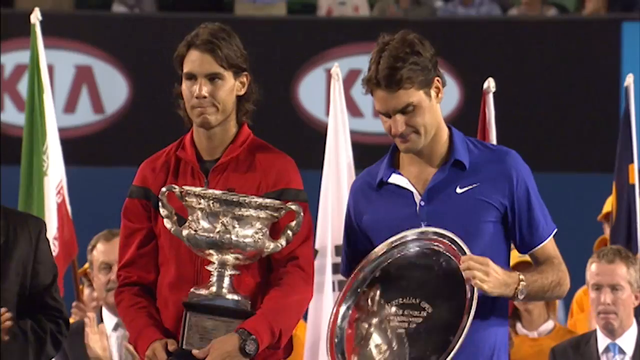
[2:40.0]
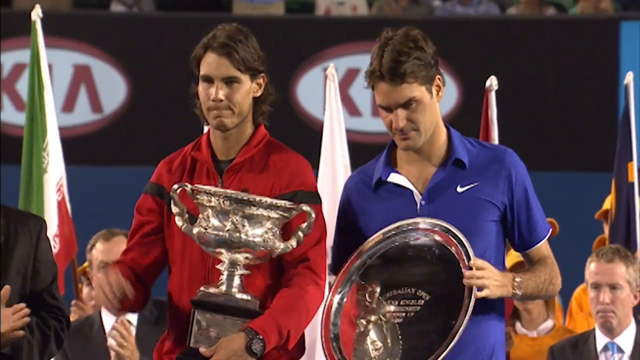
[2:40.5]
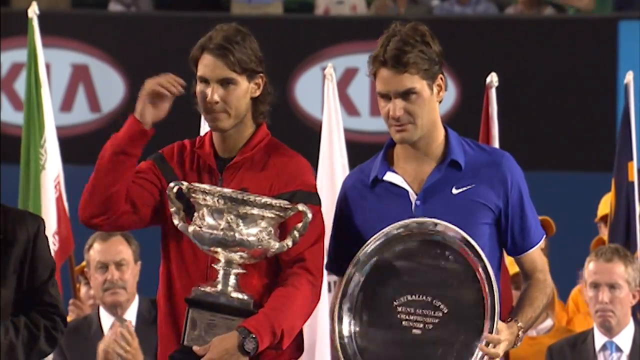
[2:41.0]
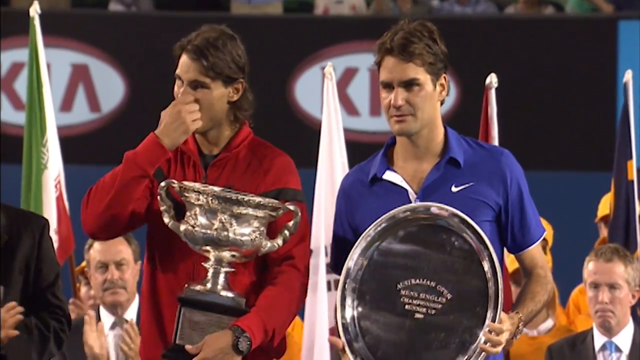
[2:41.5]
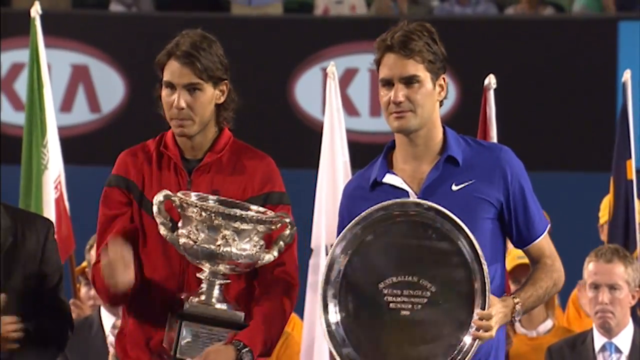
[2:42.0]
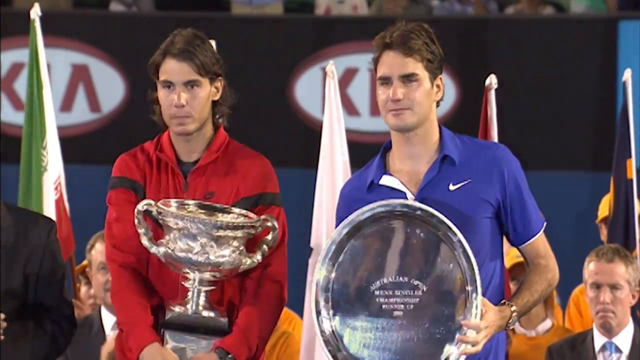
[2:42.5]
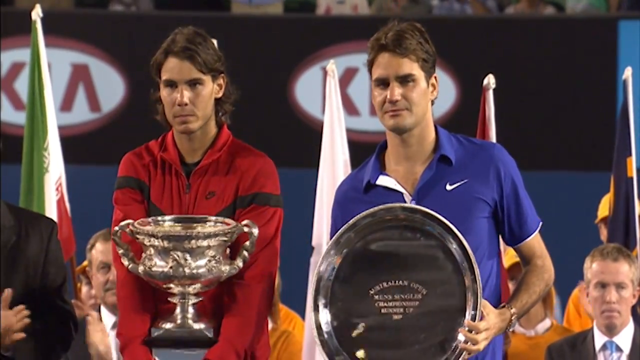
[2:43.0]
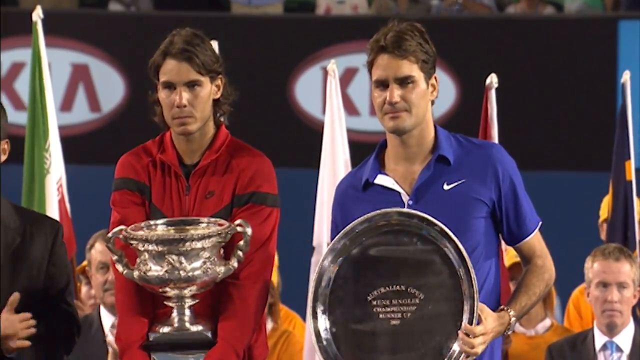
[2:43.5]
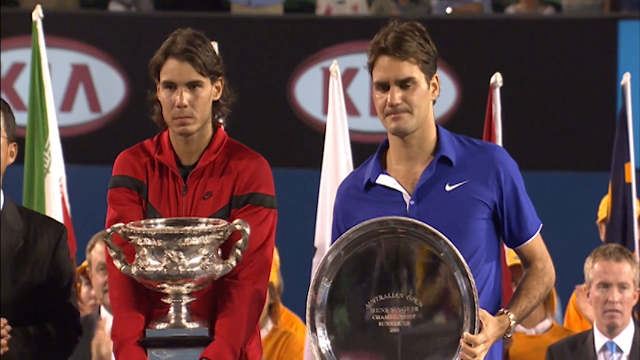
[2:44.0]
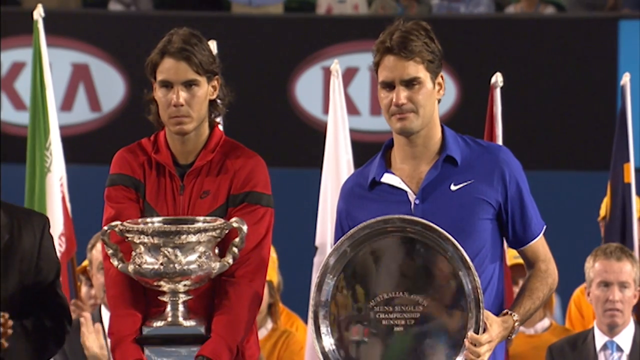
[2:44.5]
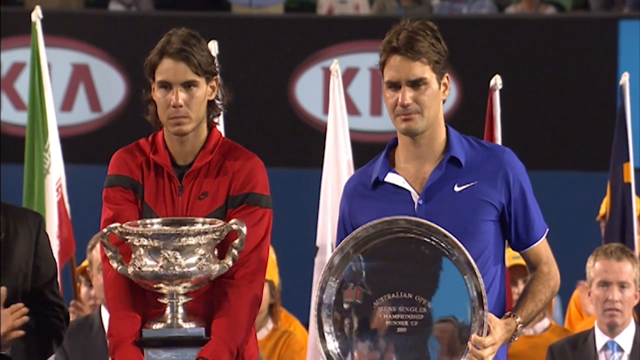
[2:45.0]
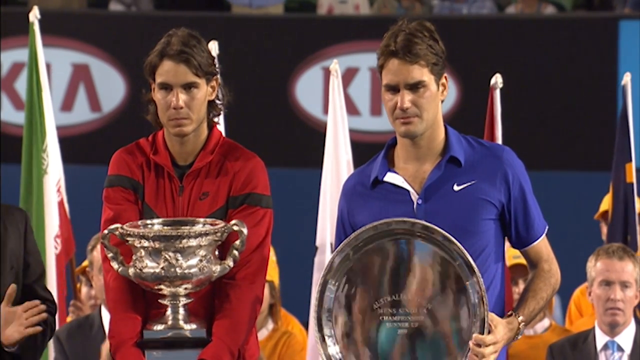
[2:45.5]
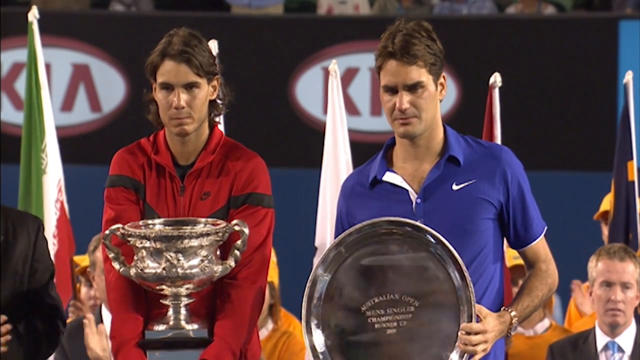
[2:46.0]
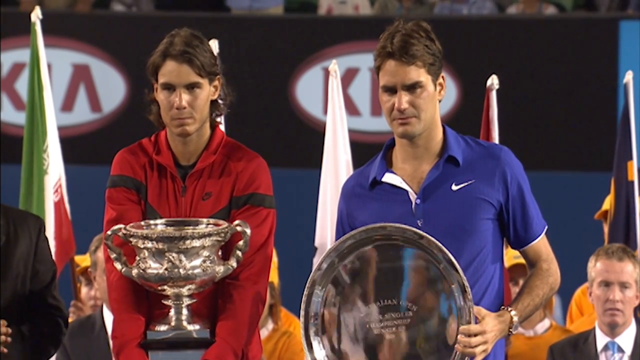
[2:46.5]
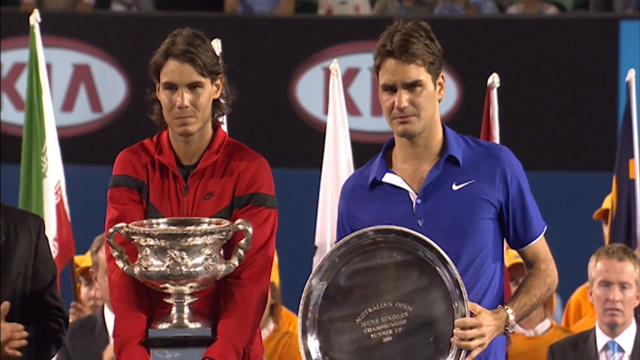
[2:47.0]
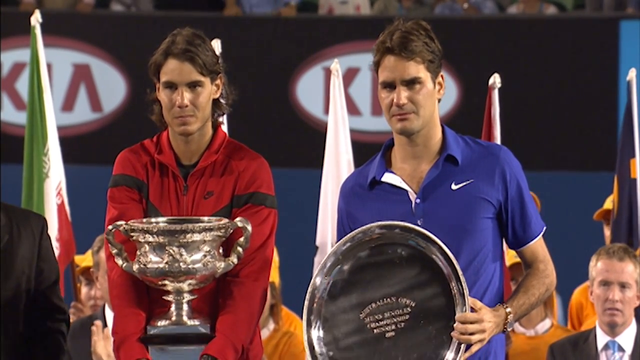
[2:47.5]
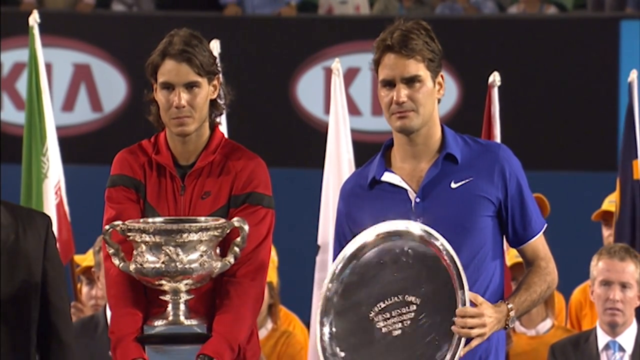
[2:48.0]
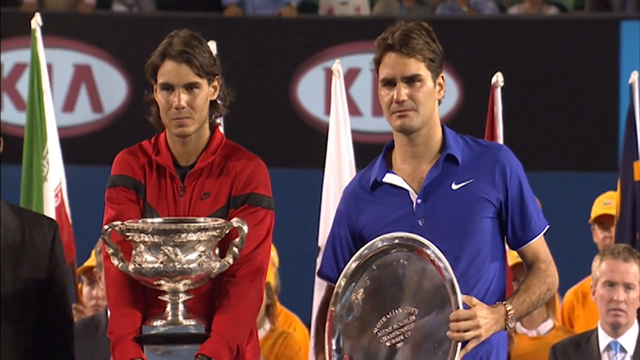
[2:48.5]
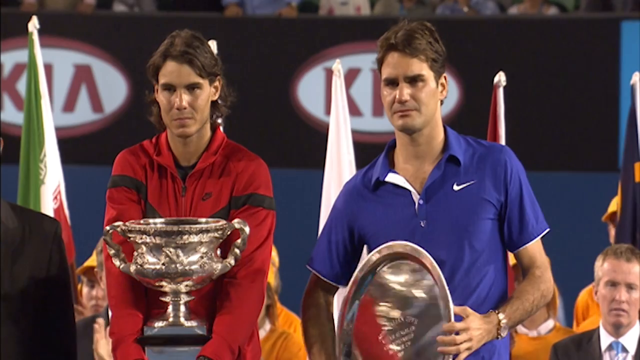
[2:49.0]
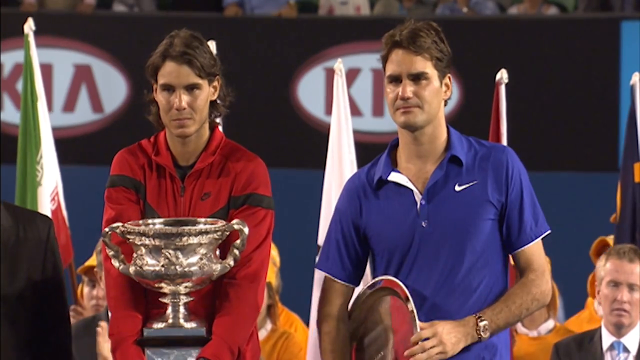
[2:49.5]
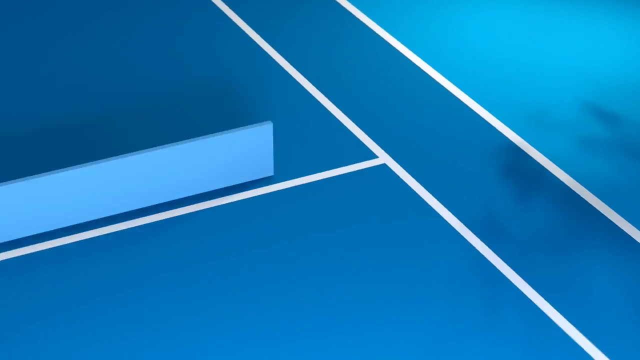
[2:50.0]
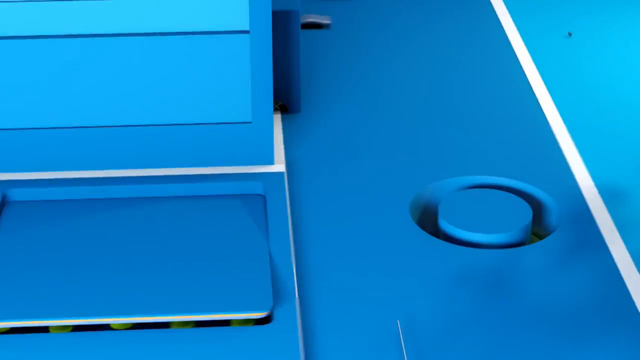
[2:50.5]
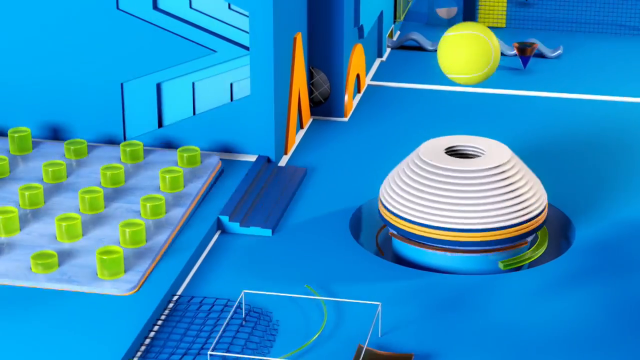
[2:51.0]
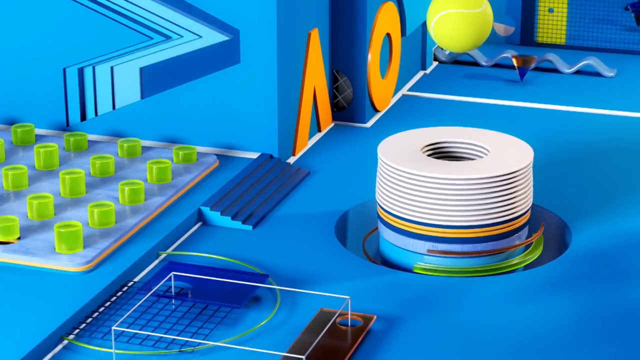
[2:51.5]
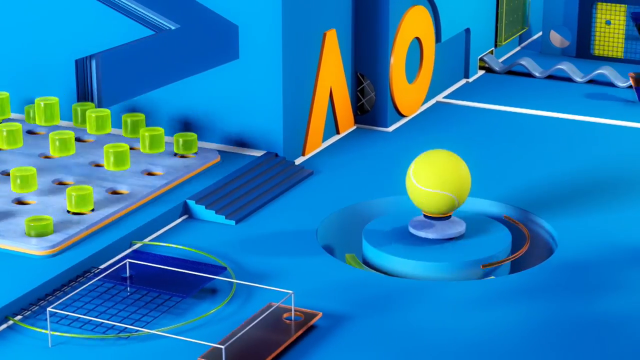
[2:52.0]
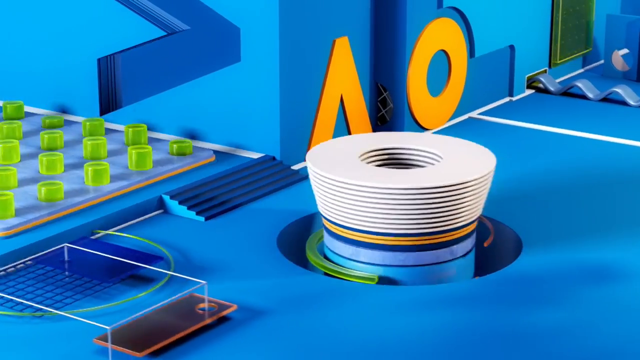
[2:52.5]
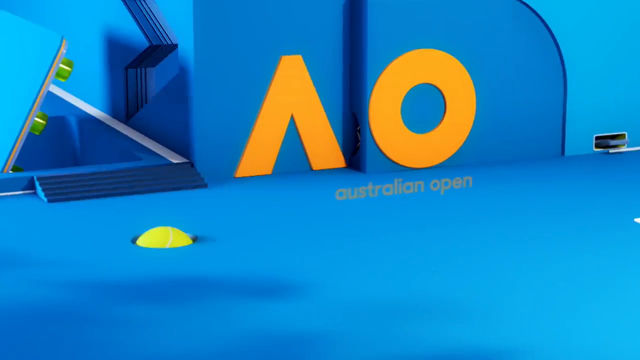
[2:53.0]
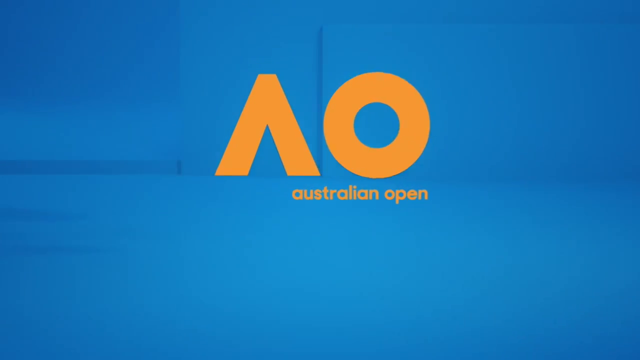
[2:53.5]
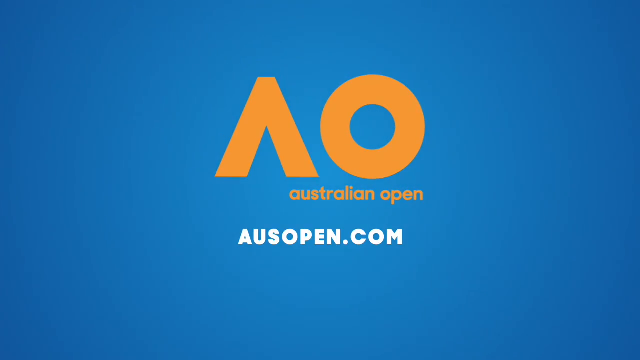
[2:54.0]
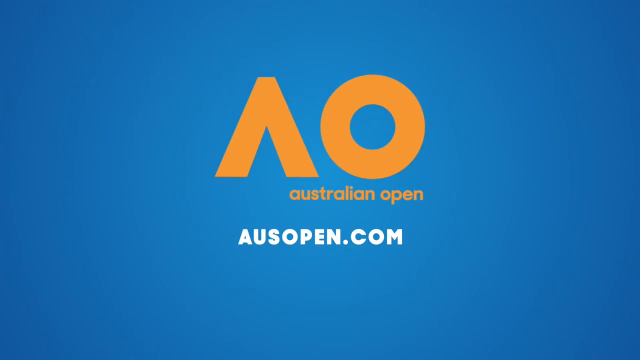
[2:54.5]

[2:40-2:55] Both players raise their trophies and pose for pictures. Raphael holds his cup with two hands, as it seems a bit heavier than Roger's silver trophy. Everyone claps, including the managers behind them. Country flags are behind them but are not visible enough to tell which countries. The outro shows the channel abbreviation "AO", for Australian Open, and "ausopen.com".